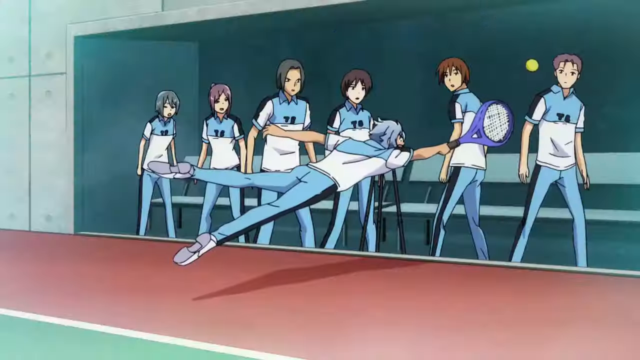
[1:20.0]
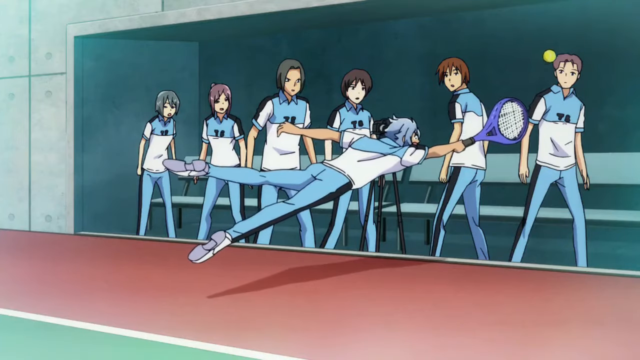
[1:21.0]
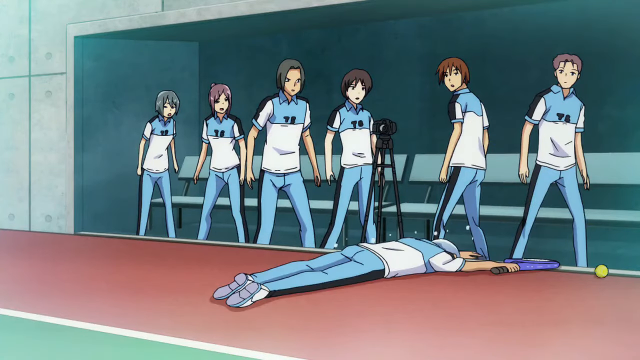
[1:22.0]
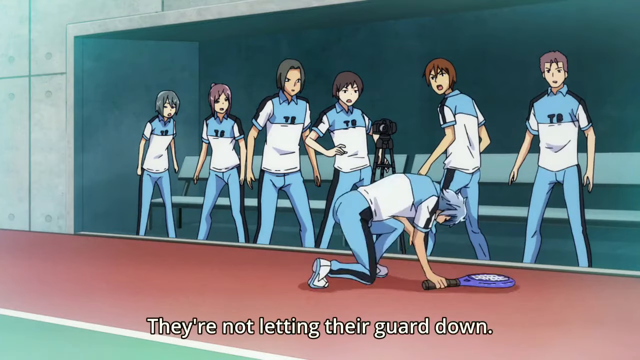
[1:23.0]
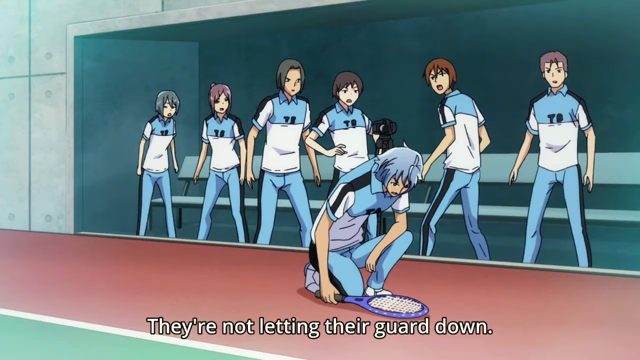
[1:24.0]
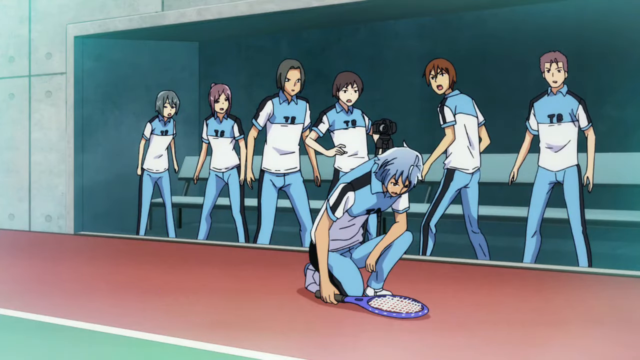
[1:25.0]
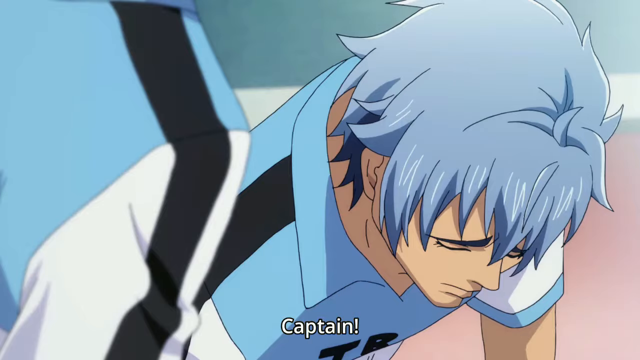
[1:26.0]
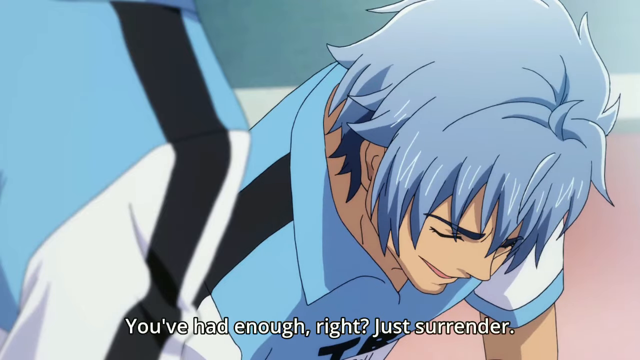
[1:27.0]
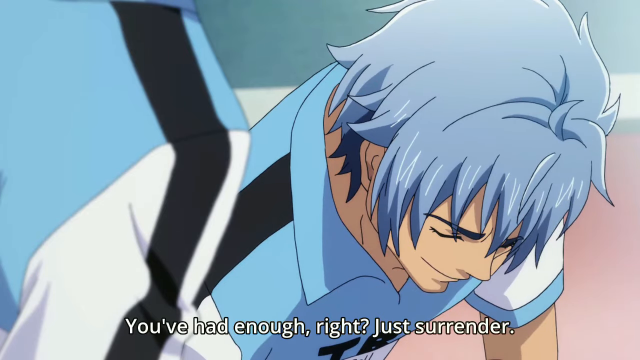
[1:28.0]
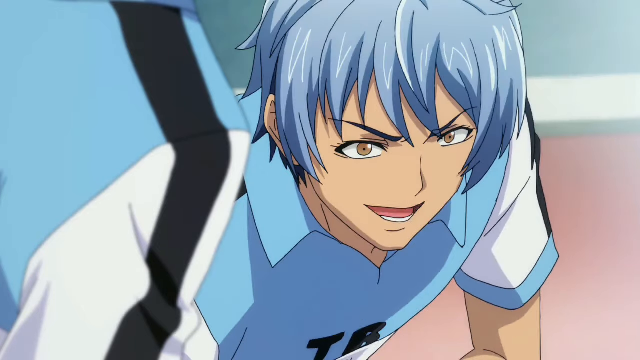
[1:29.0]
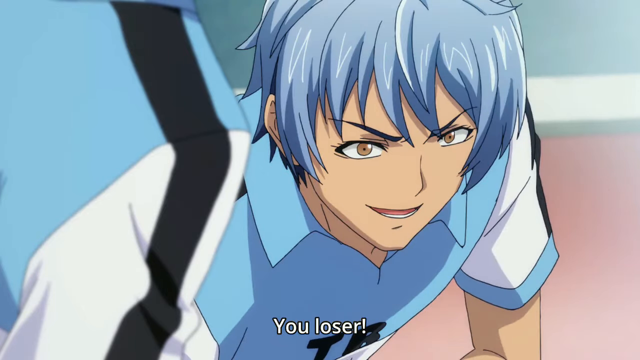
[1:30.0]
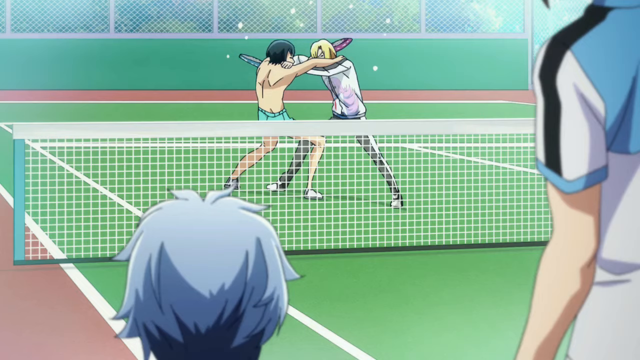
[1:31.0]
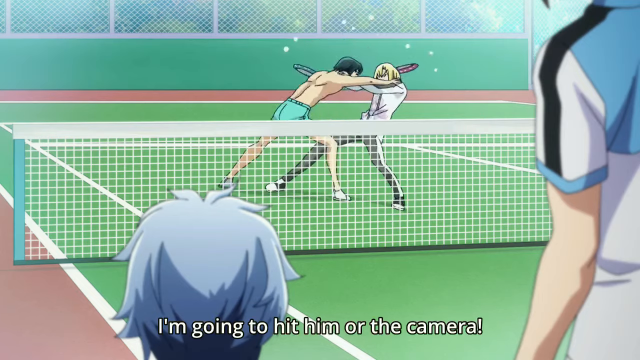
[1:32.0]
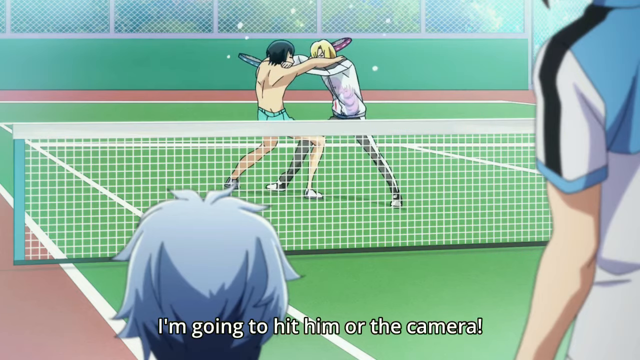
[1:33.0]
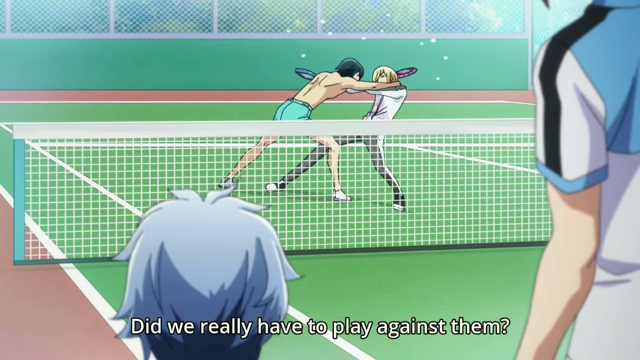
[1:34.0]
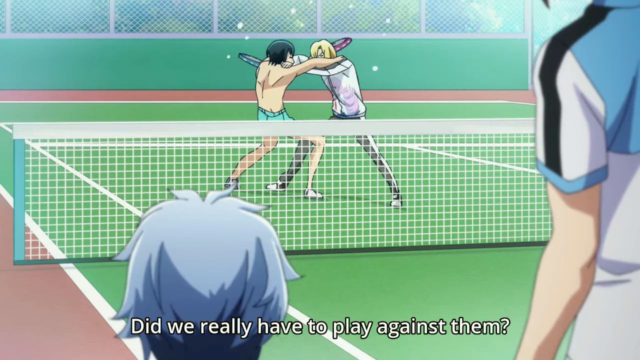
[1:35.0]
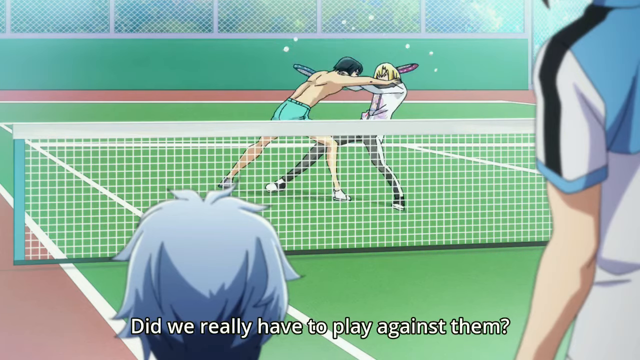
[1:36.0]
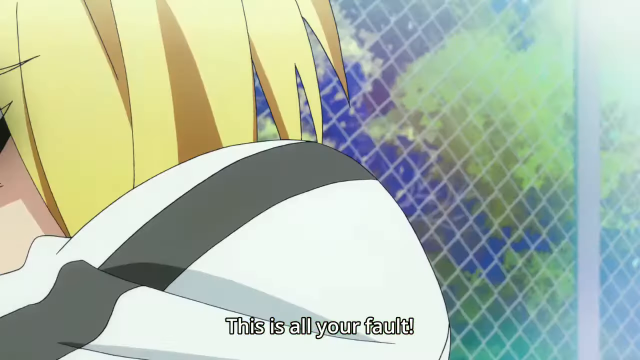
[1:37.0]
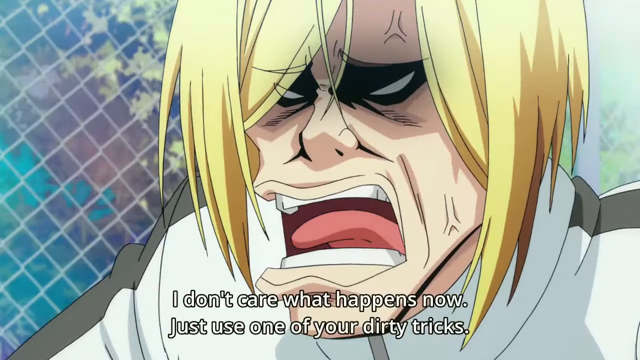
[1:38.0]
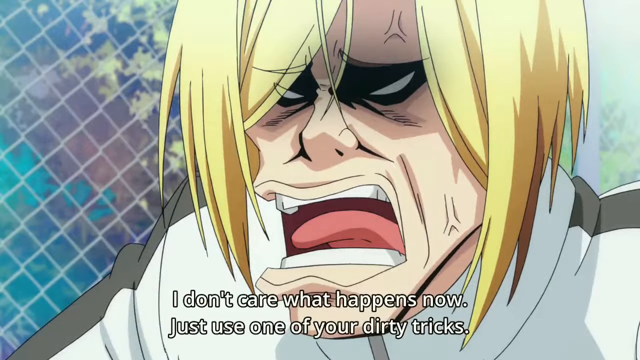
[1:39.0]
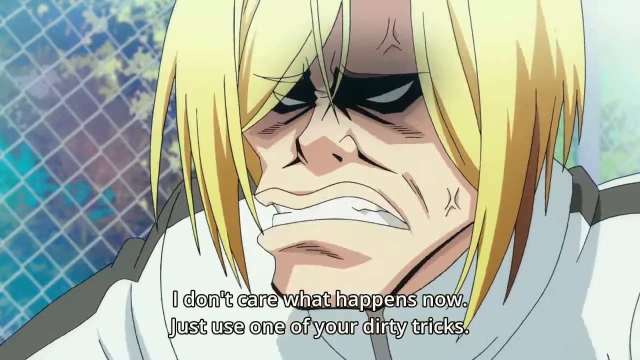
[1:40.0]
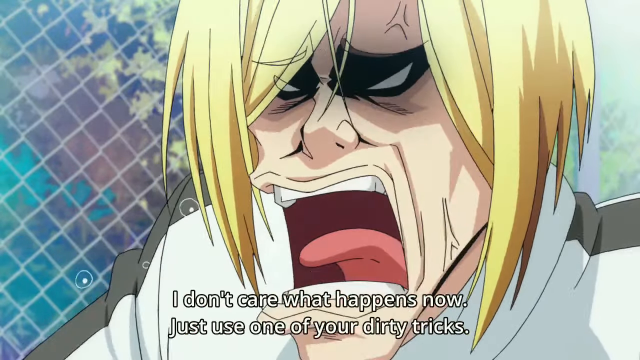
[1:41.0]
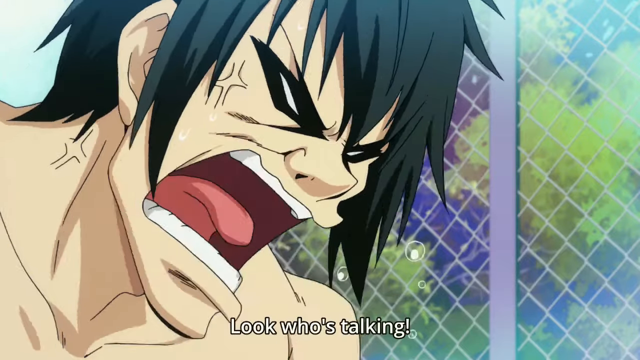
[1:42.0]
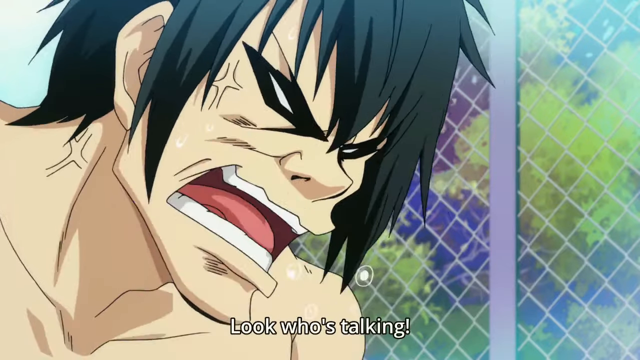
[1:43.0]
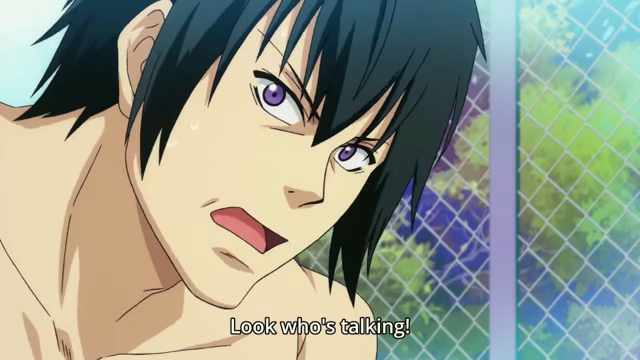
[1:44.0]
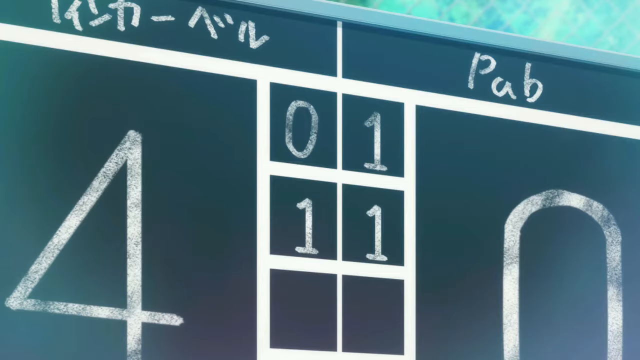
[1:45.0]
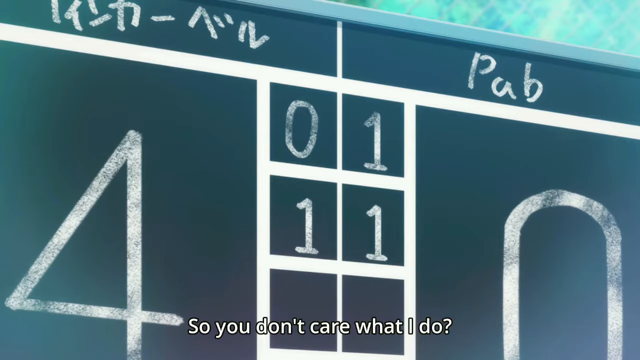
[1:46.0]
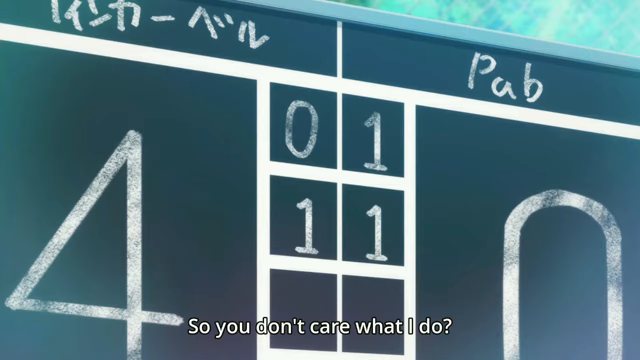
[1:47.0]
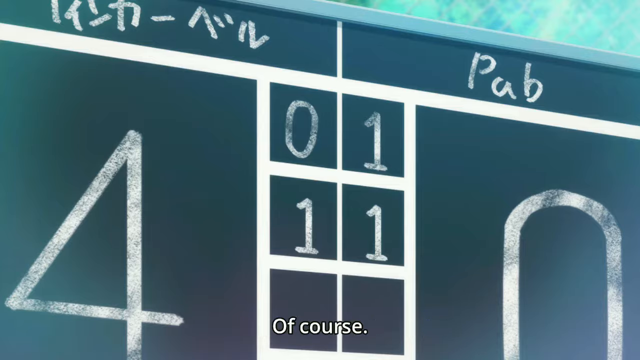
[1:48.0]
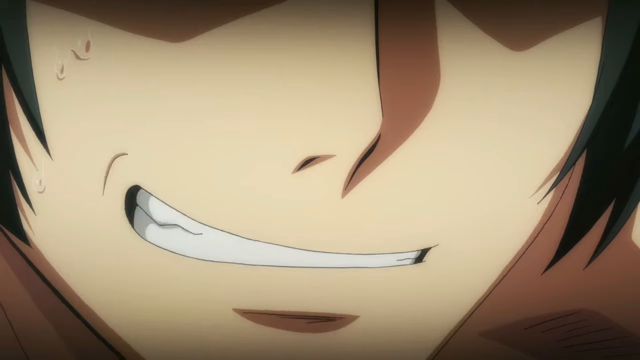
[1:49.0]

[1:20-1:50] The animated tennis match shows the edge of the court, where six people all wear the same blue and white uniform with the letters "TB" written on their tops. A black camera is next to two of them, and another tennis player, in the same colour uniform, leaps through the air in front of them, trying to get to the tennis ball coming straight towards them. He manages to get the ball with his racket. Words come up on the bottom of the screen saying "they're not letting their guard down." He bends down, looking tired from trying to get the ball, and the word "captain" comes up on the screen as another player runs over to him. More words say "you've had enough right just surrender. You loser." The animated character has short blue hair and black eyebrows. The other team, on the other side of the net, is shown fighting one another instead of playing. The words say "did we really have to play them this is all your fault. I don't care what happens now just use one of your dirty tricks. Look who's talking."